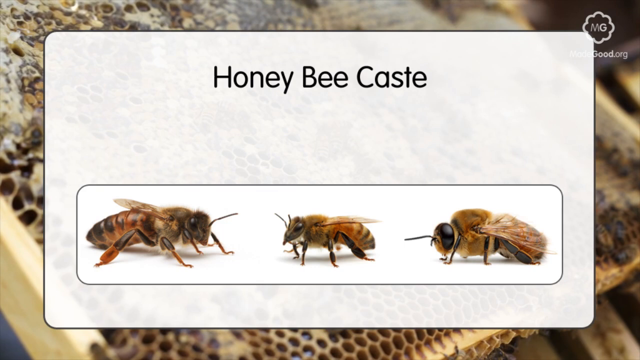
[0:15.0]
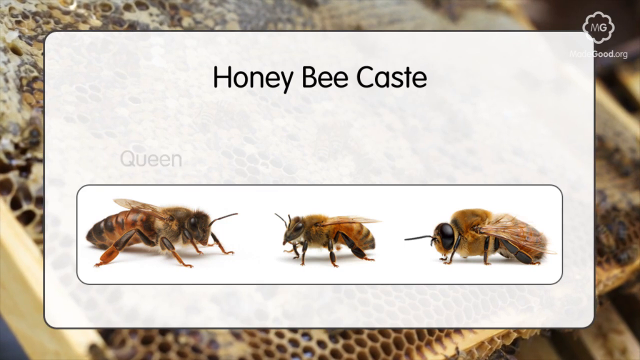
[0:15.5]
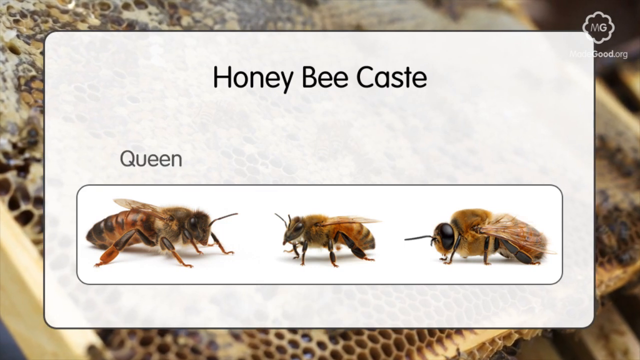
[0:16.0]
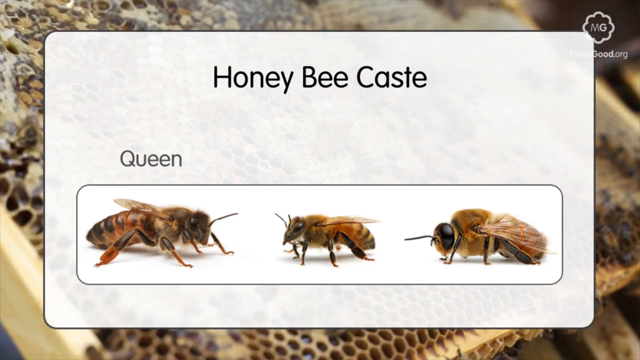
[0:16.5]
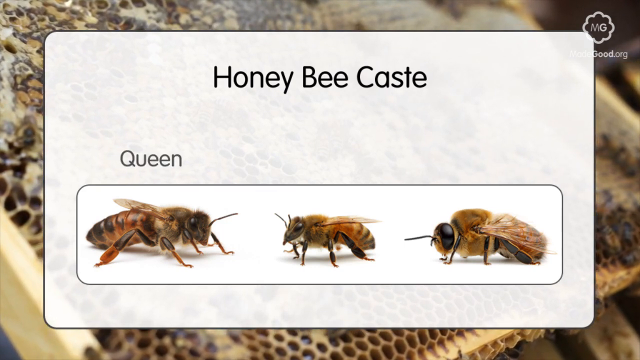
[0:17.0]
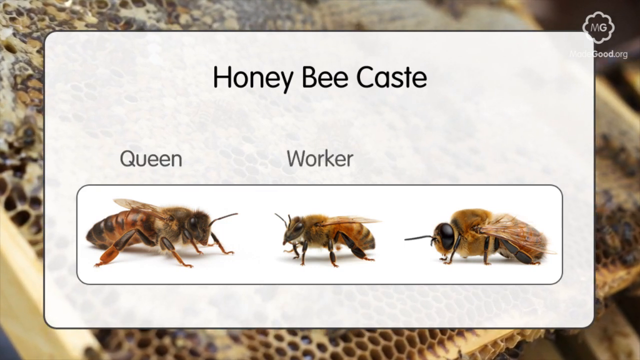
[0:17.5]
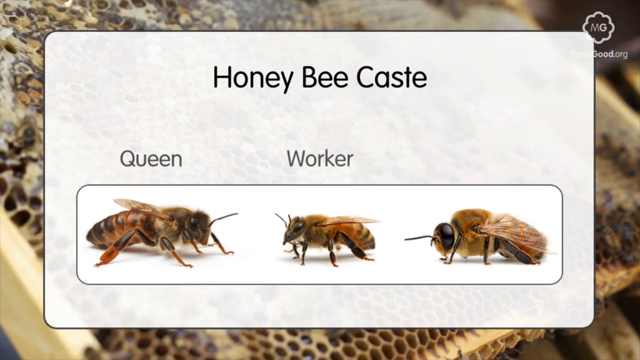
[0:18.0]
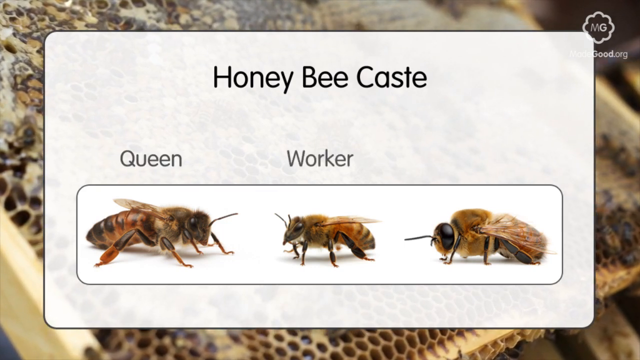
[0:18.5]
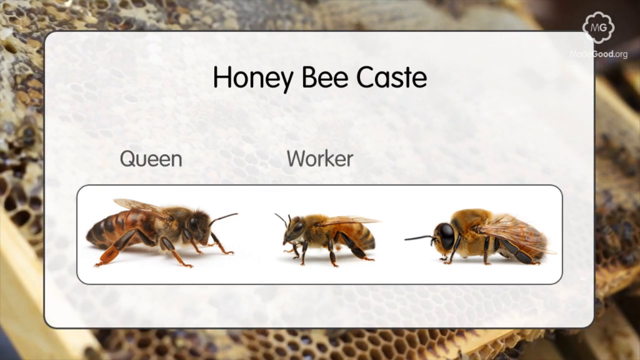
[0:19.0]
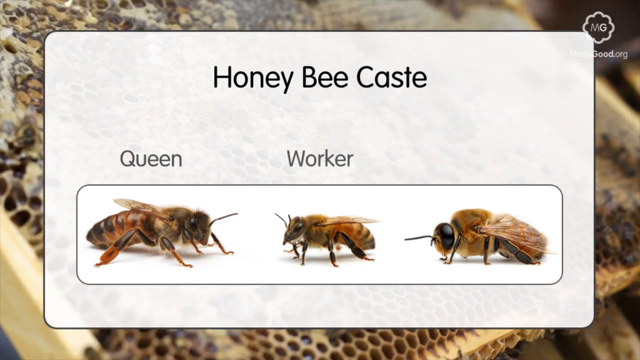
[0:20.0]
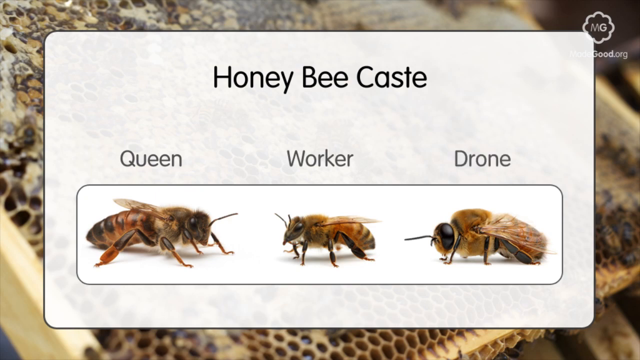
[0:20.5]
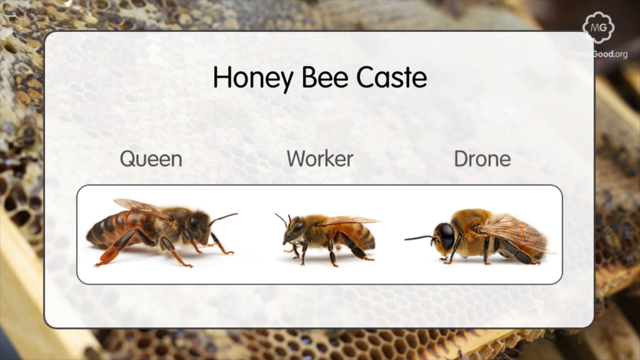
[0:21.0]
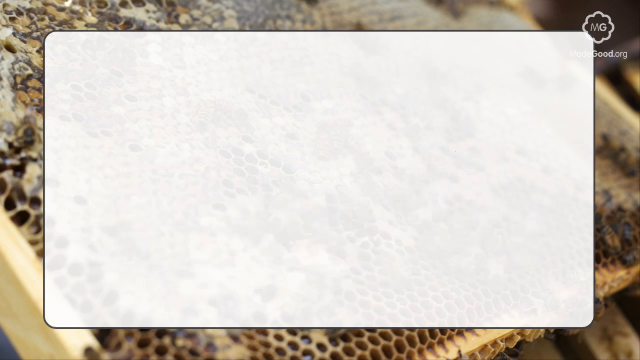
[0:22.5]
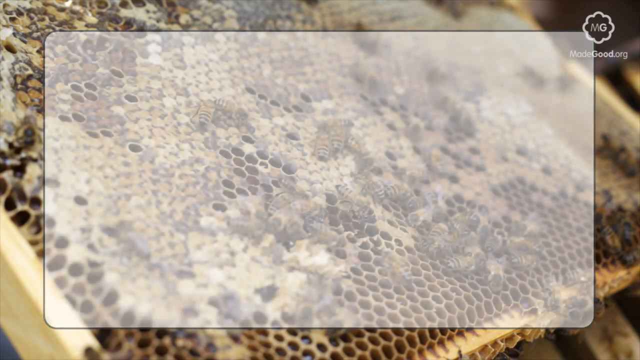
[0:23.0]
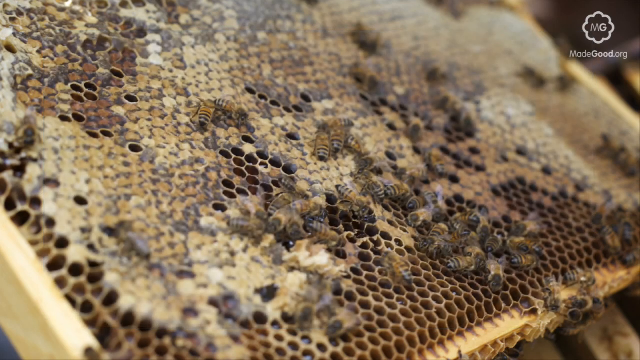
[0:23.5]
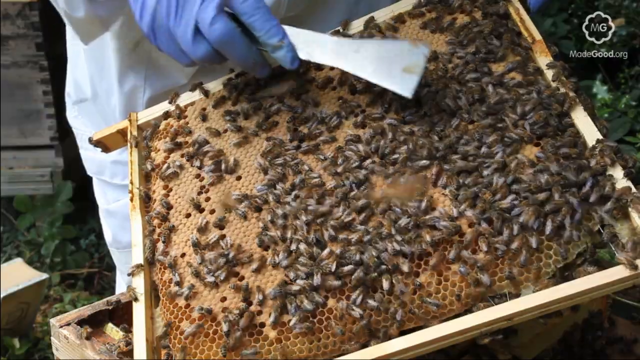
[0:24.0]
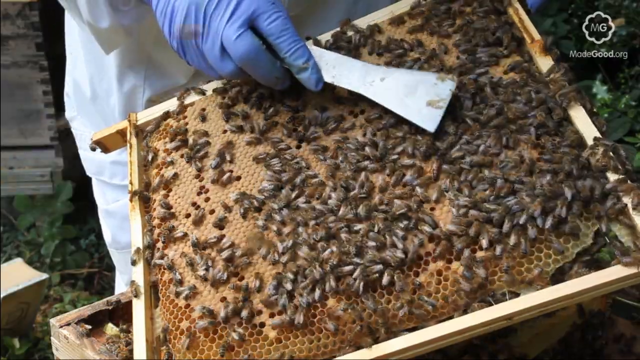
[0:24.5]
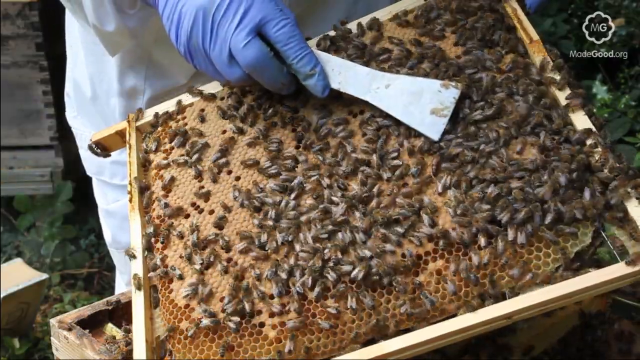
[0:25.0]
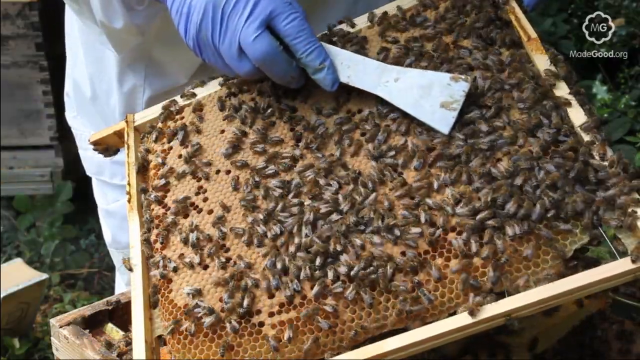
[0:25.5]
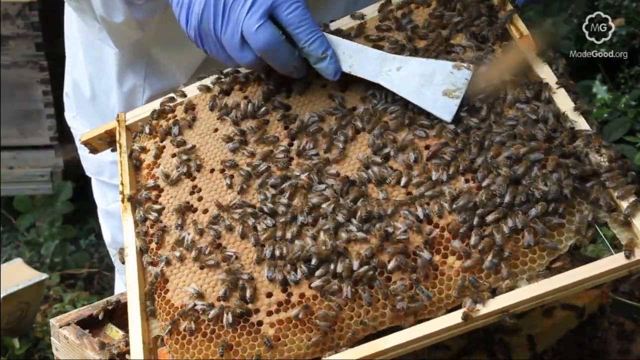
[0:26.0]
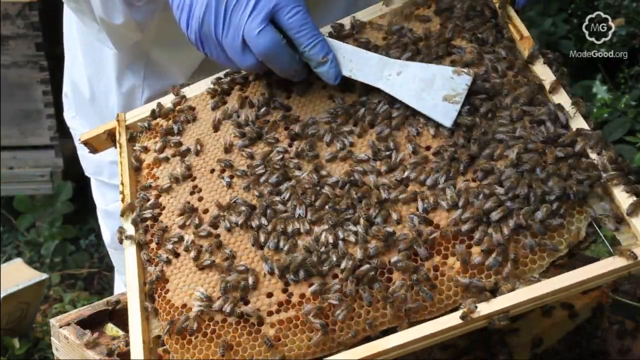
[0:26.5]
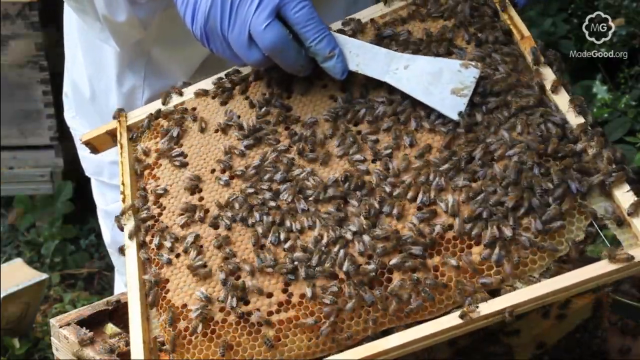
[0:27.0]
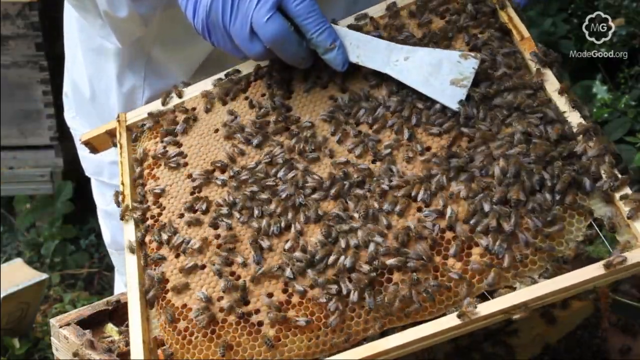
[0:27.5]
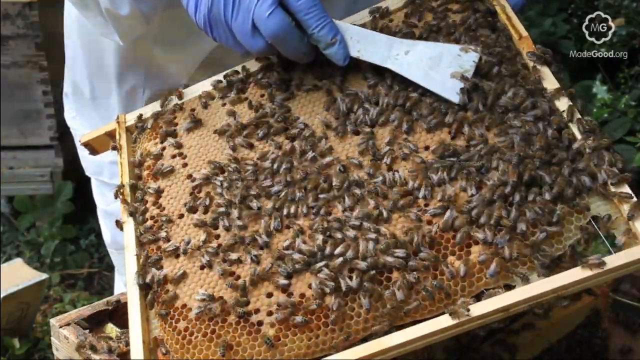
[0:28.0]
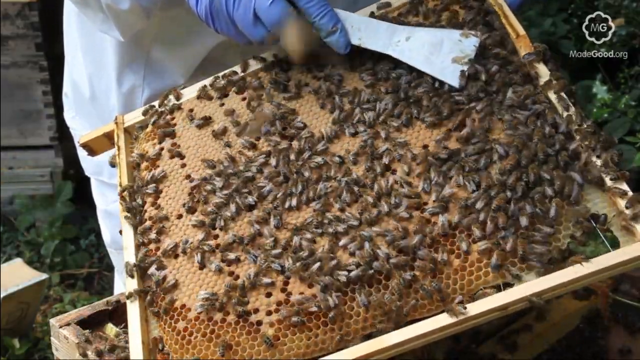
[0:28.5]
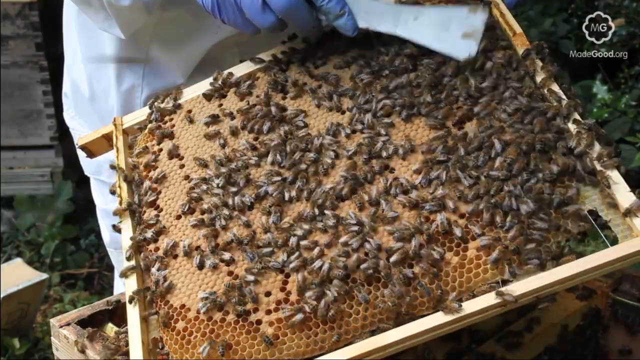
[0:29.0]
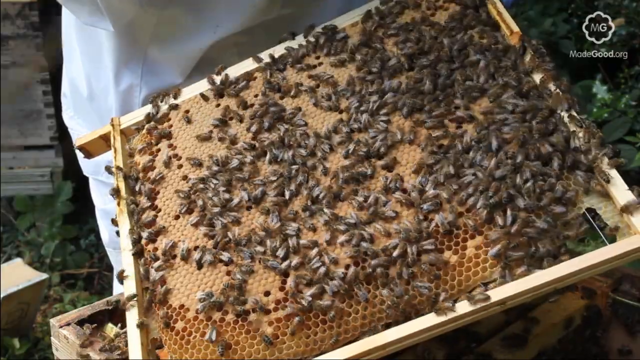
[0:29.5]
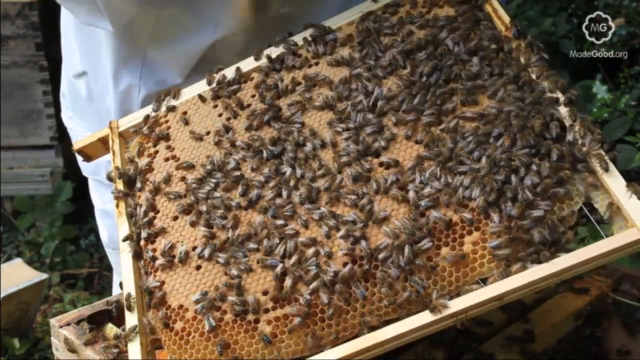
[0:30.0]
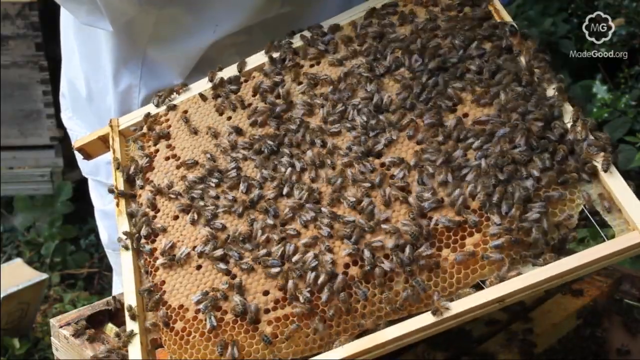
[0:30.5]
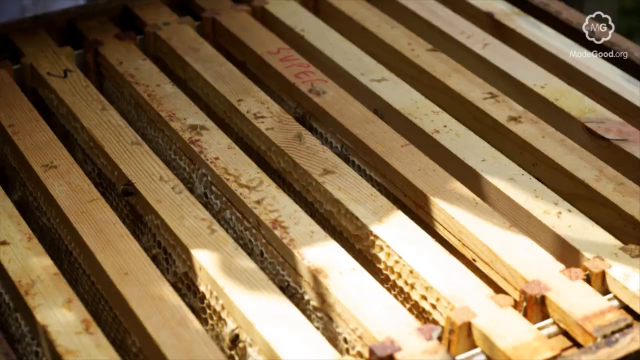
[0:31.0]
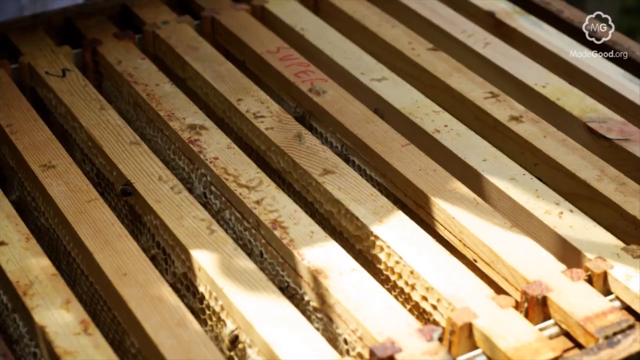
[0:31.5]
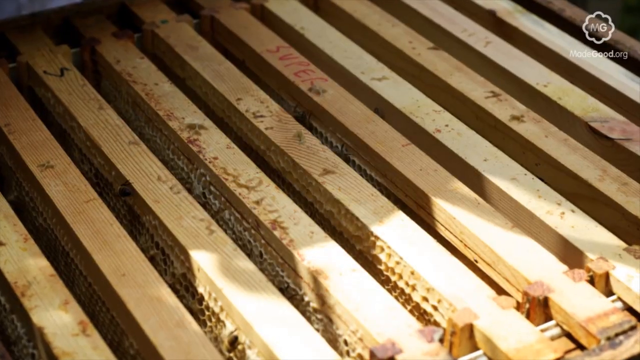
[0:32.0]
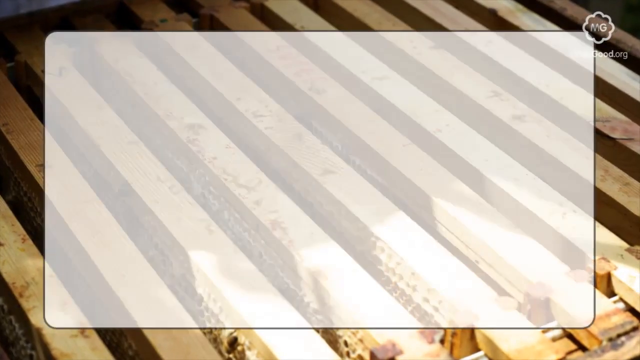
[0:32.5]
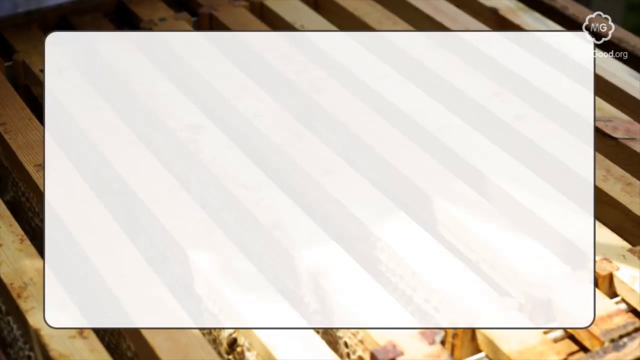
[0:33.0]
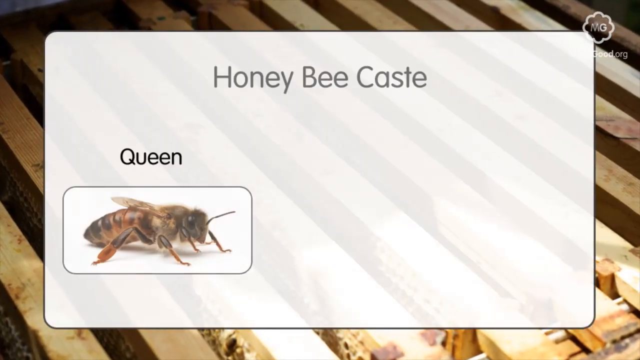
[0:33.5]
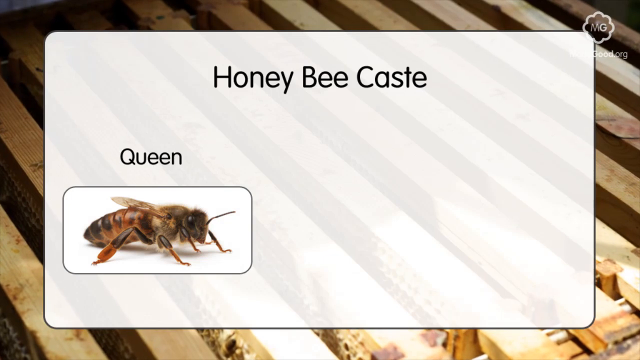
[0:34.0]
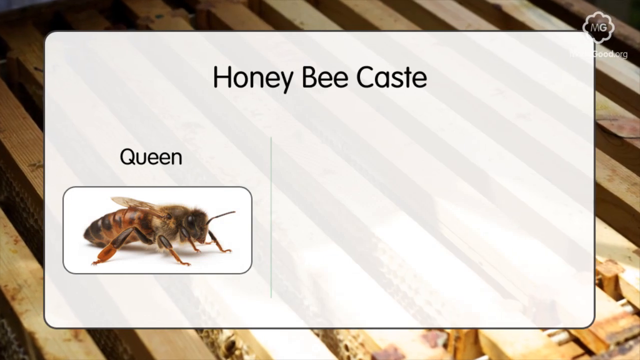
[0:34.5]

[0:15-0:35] An infographic titled "honeybee cast" shows three different bees. The first is labeled "queen" and looks slightly larger; it faces toward the viewer with its legs on the ground. The middle one is the "worker", which looks slightly smaller, has a brownish back, and its eyebrows can be seen up close. The third is the "drone", with a larger body than the worker and a black head. The video then shows many bees kind of swarming on a wooden center with a lot of circles. A person in a white suit with a blue glove uses a silver tool, likely to work with the bees. This takes place outdoors.